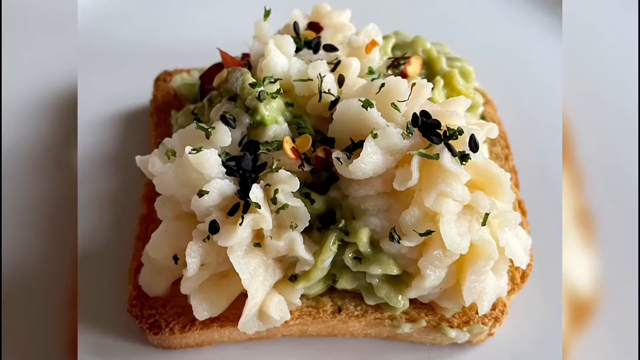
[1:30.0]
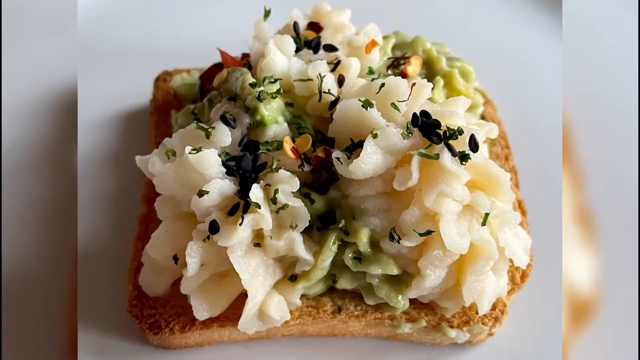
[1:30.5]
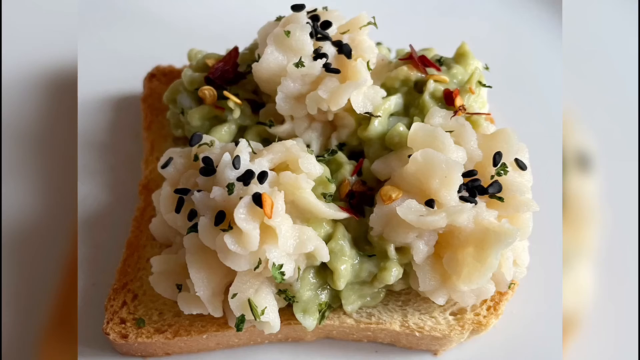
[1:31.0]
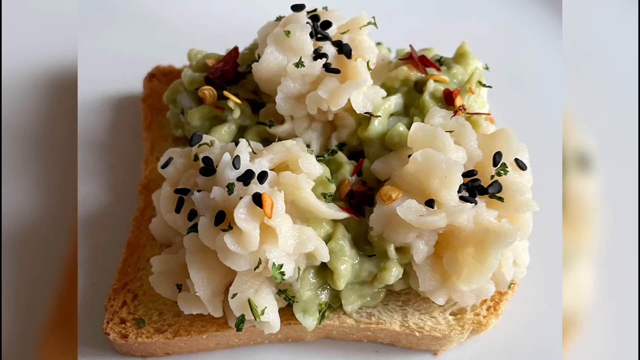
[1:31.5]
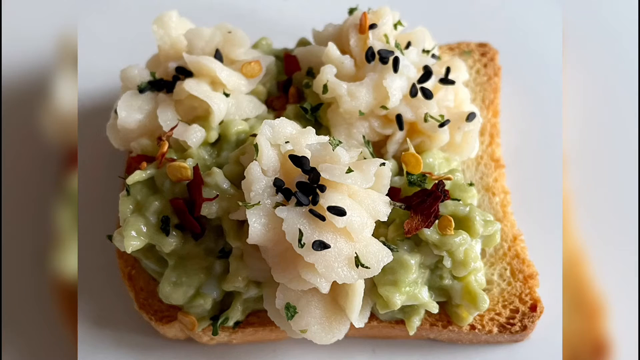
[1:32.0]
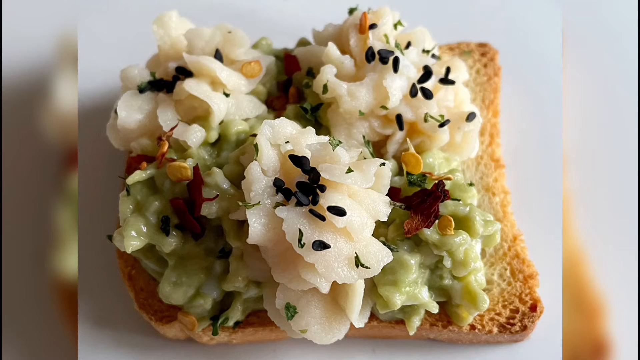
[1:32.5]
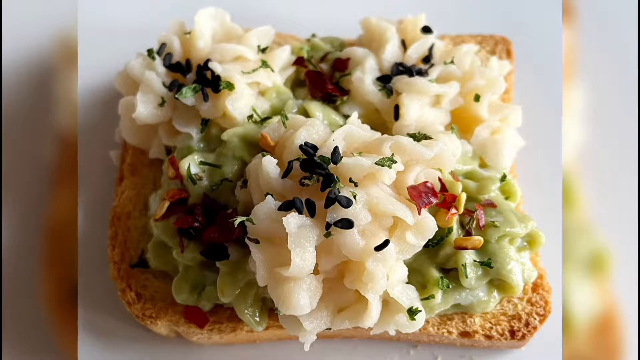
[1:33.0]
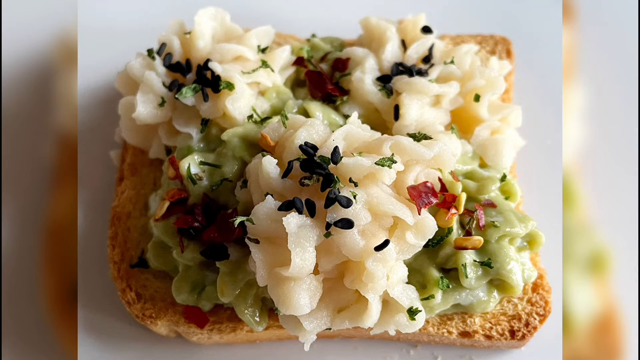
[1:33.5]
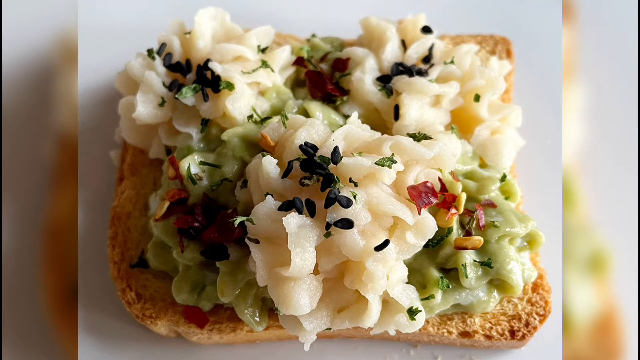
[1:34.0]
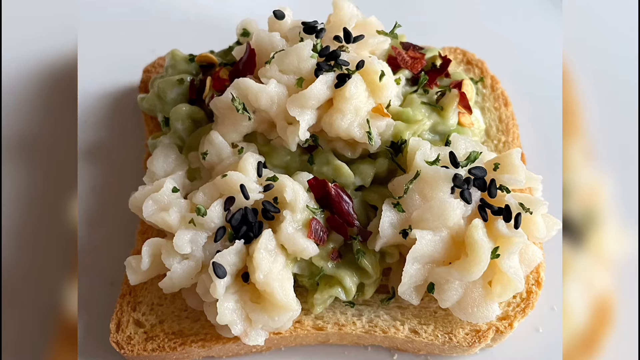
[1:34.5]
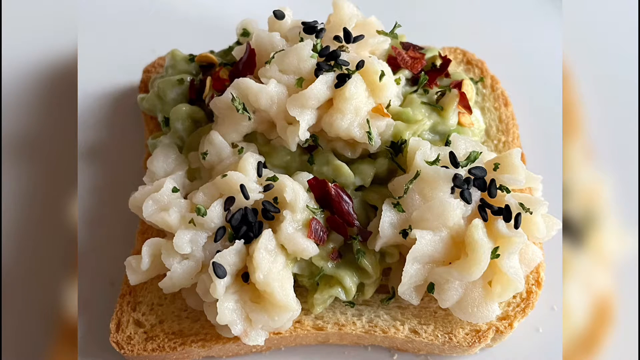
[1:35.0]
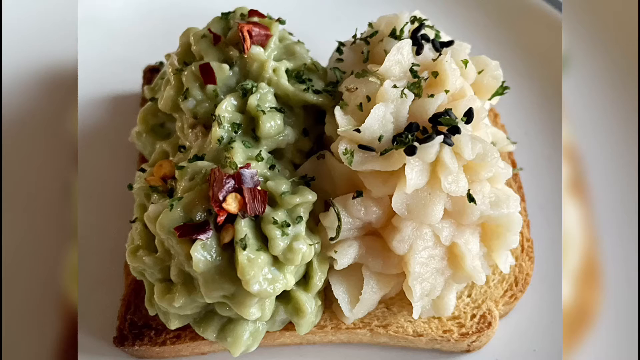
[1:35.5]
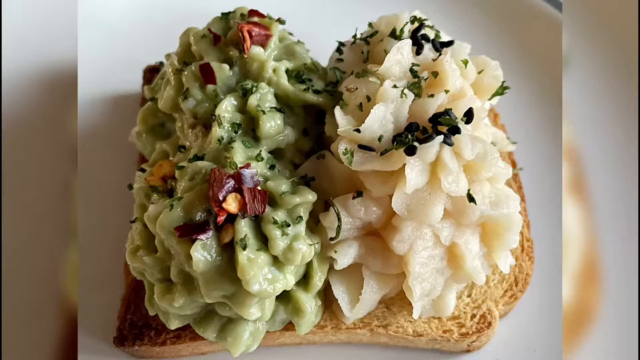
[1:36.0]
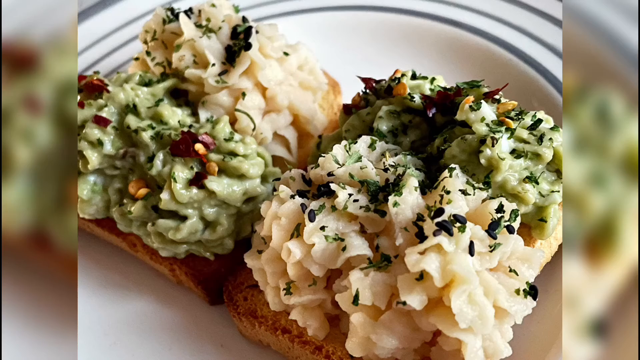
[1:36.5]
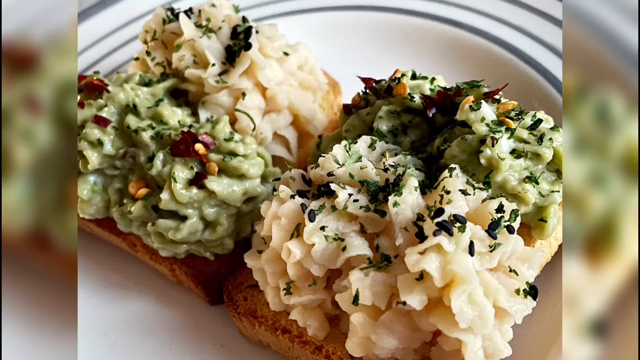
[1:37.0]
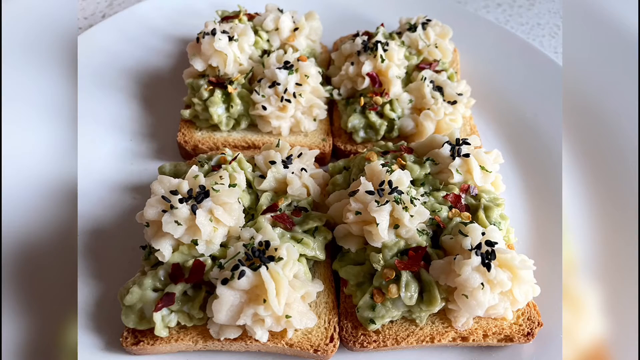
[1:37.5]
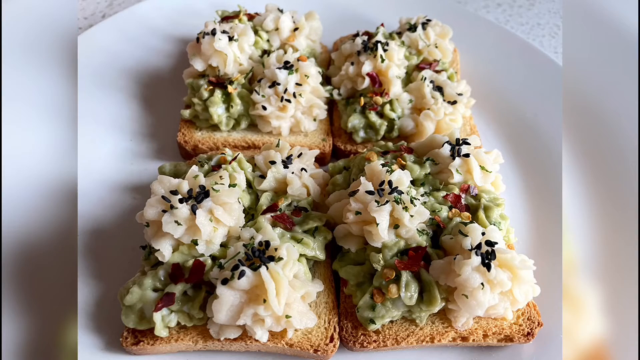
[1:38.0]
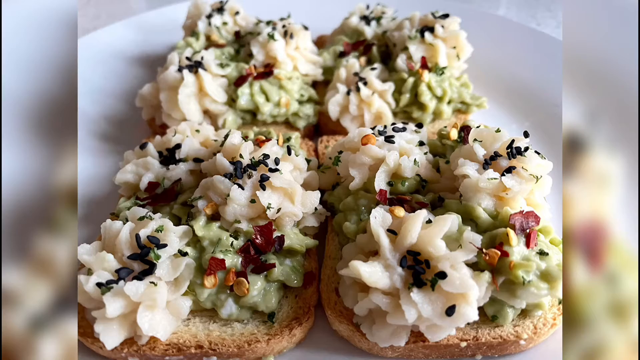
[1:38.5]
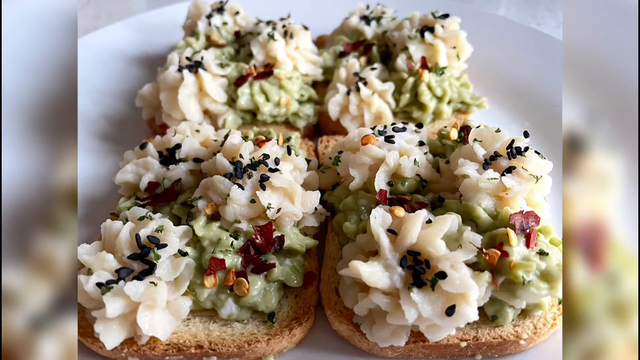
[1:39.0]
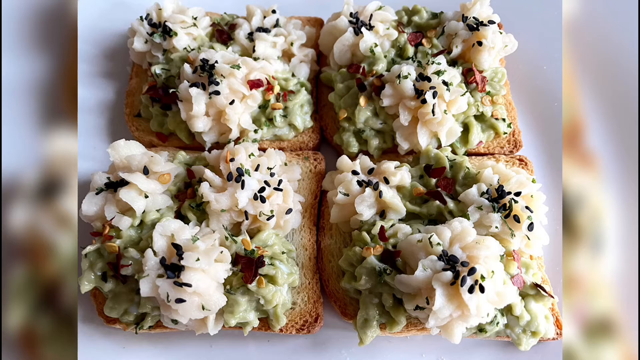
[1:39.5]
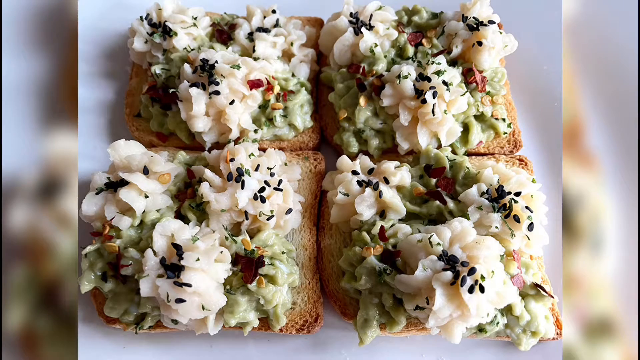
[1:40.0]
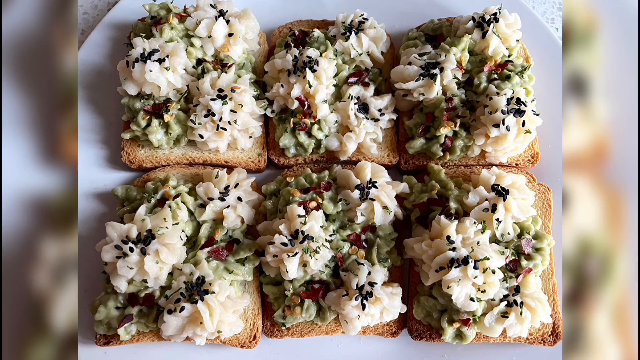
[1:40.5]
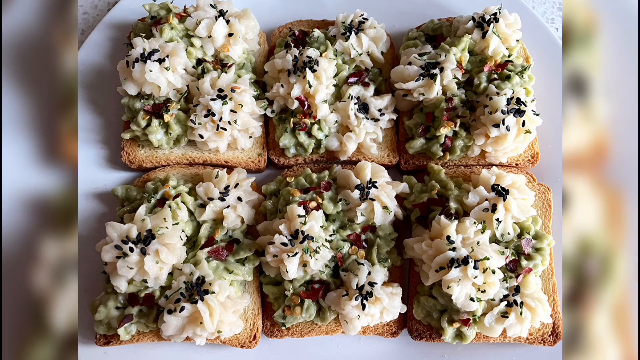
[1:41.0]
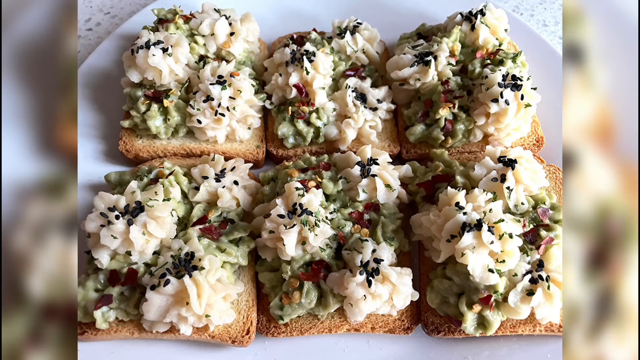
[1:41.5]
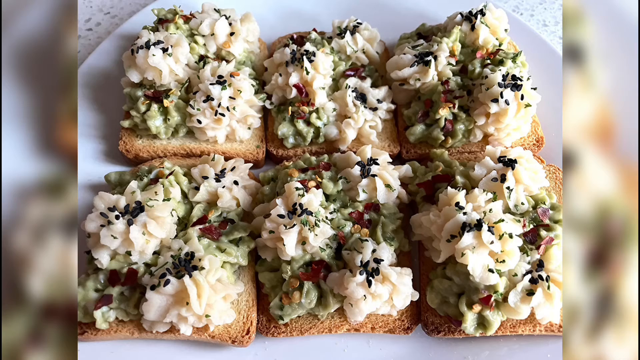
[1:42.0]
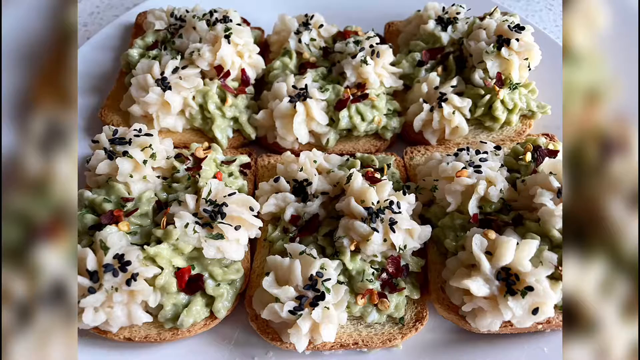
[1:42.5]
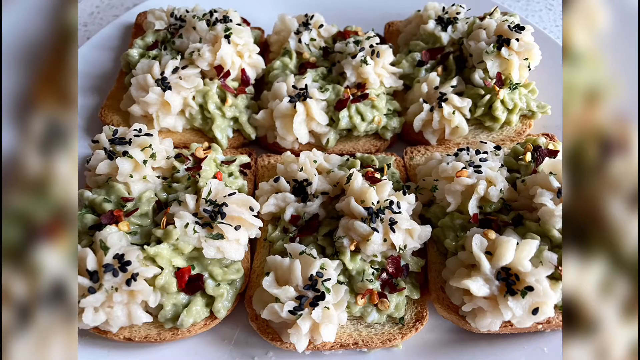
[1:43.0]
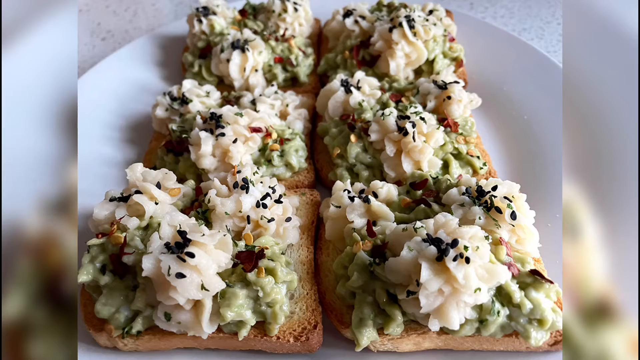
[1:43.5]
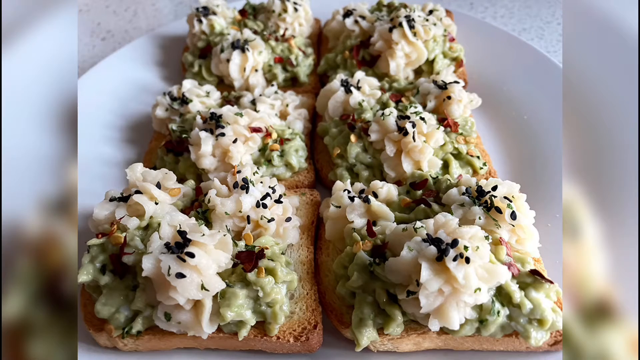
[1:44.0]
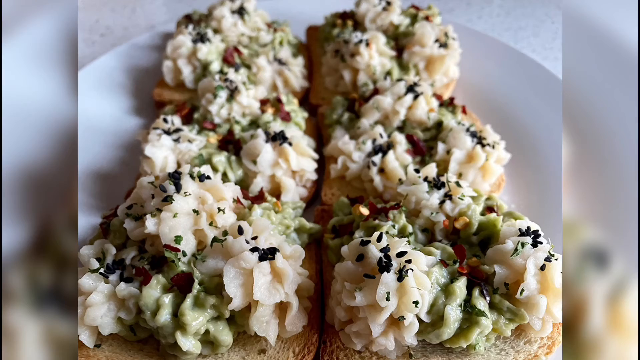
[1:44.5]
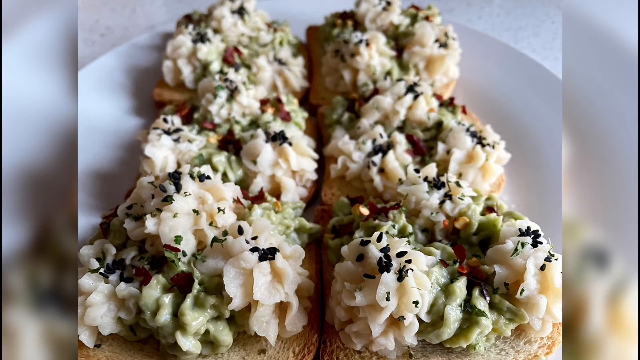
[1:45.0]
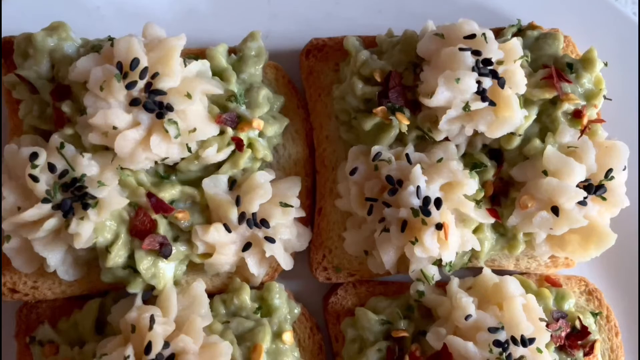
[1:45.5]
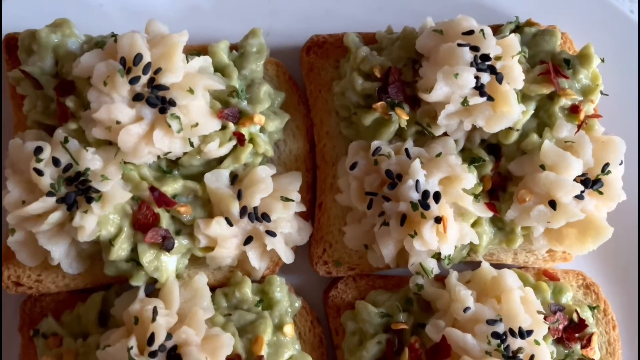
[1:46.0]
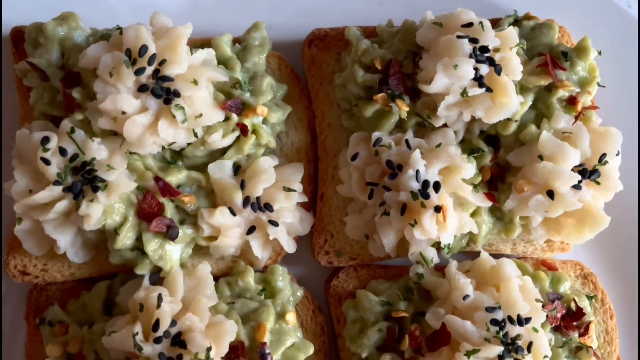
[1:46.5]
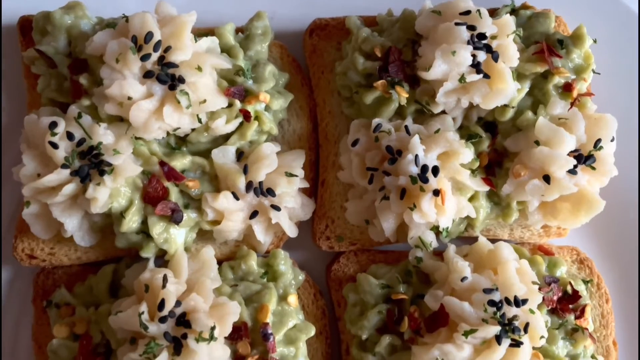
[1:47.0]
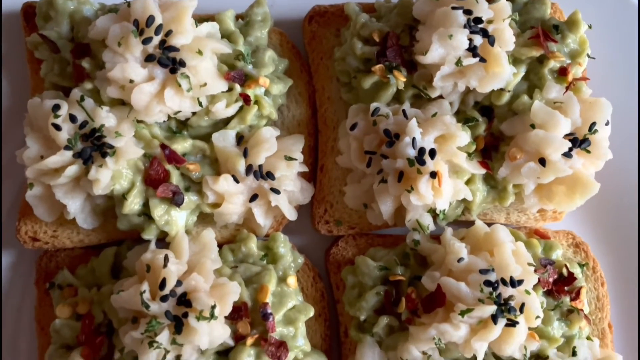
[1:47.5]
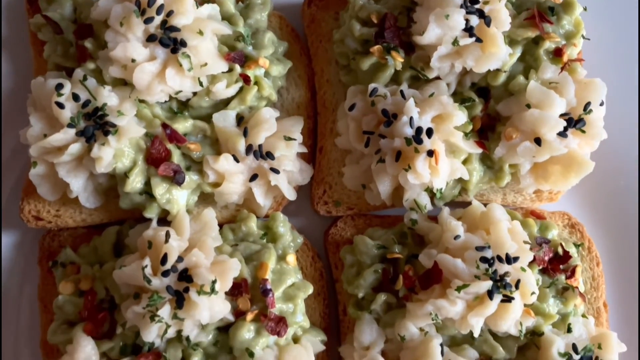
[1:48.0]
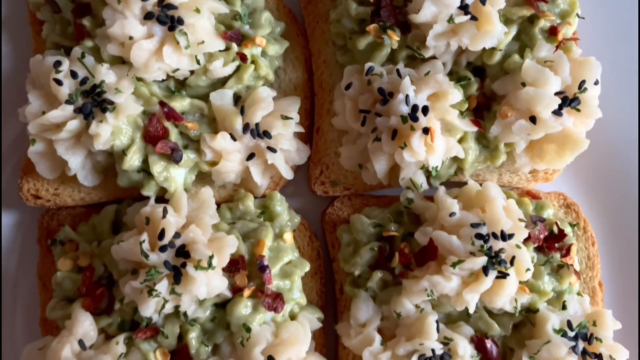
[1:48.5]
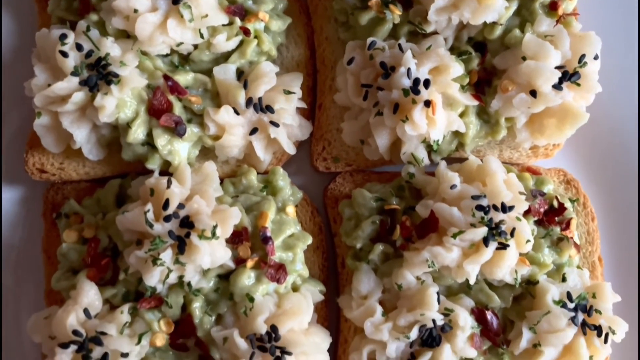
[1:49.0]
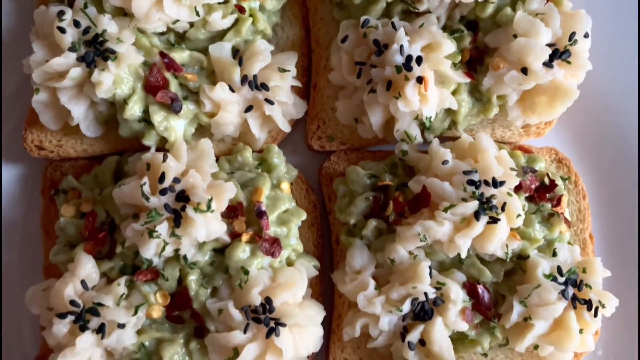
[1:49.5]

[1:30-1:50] A single piece of mini toast with an avocado and potato mixture on it, covered in black and red peppers, is placed on a white table or countertop. Another angle of the toast follows, then another with the toast facing toward the left, then several more angles. Next is an image of two pieces of toast, set facing different directions, on a white and blue plate. Four pieces of toast on a white plate follow, then a close-up of that image and another angle of it. Next, six pieces of toast are shown on a white plate on a white countertop or table, seen from two more angles. The camera then pans slowly down the plate, showing the six pieces of mini toast on the white plate.